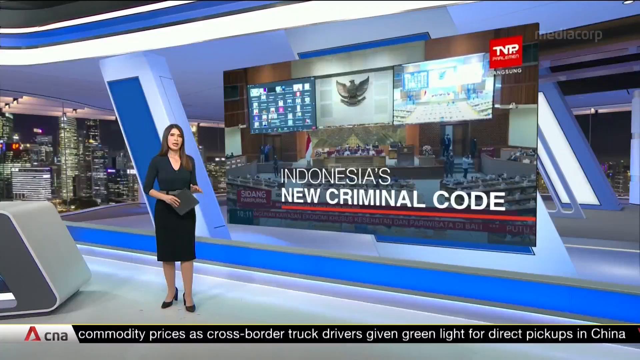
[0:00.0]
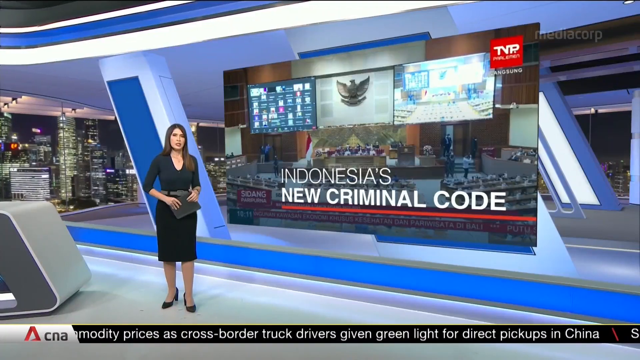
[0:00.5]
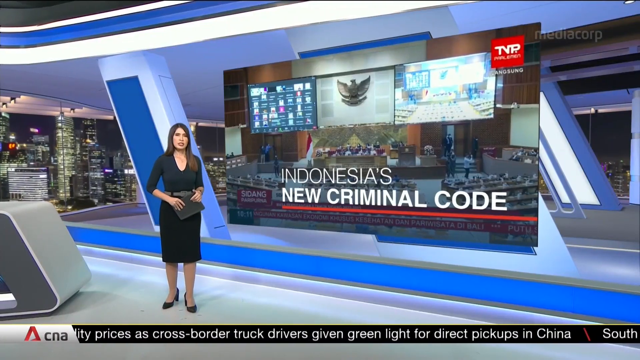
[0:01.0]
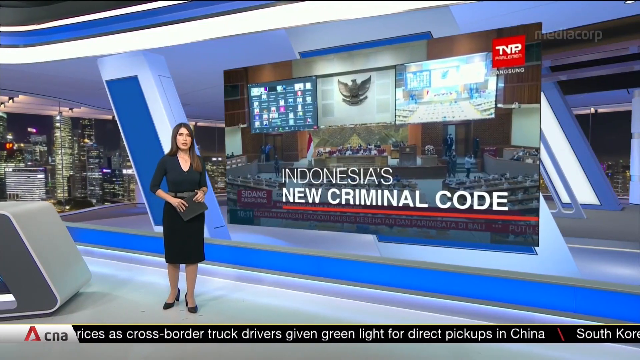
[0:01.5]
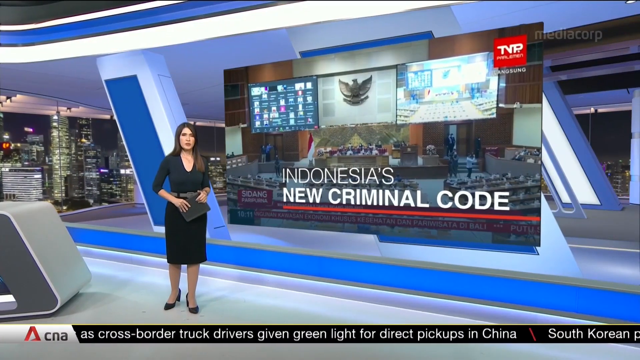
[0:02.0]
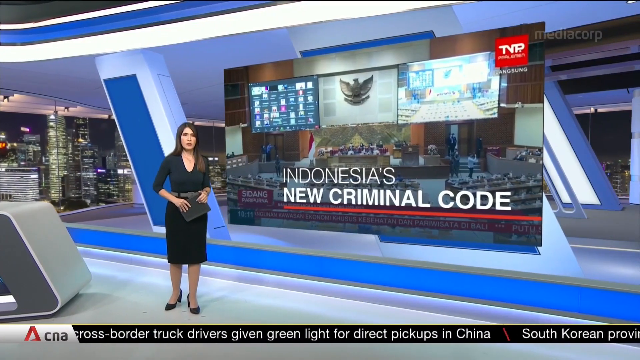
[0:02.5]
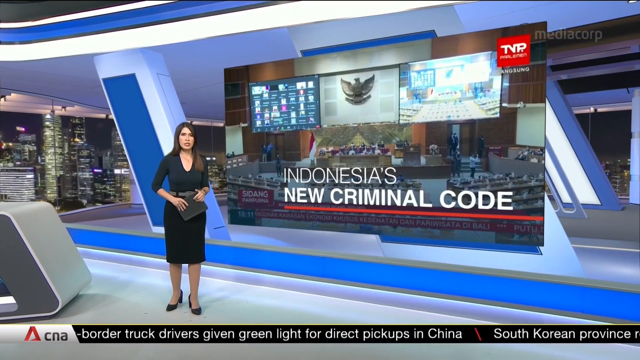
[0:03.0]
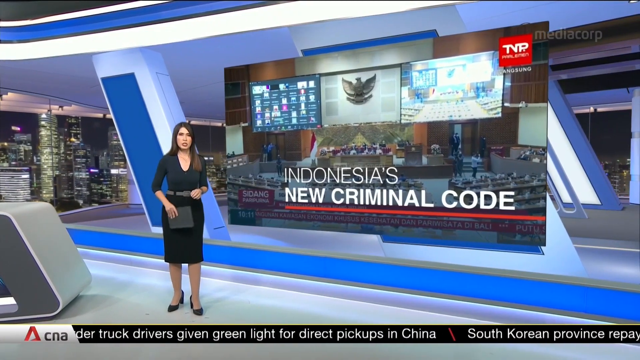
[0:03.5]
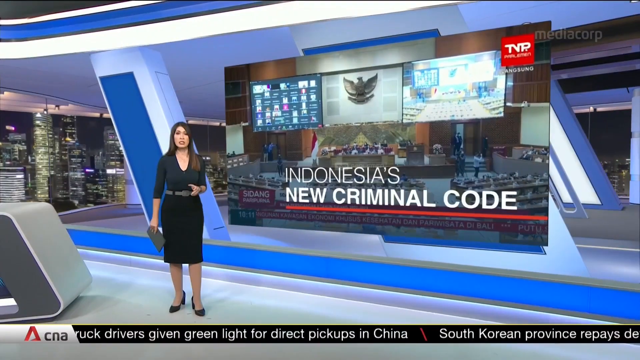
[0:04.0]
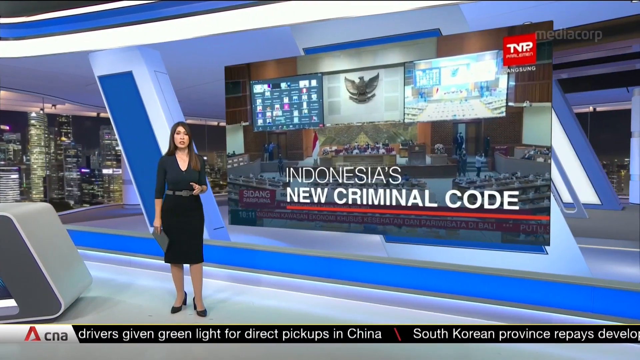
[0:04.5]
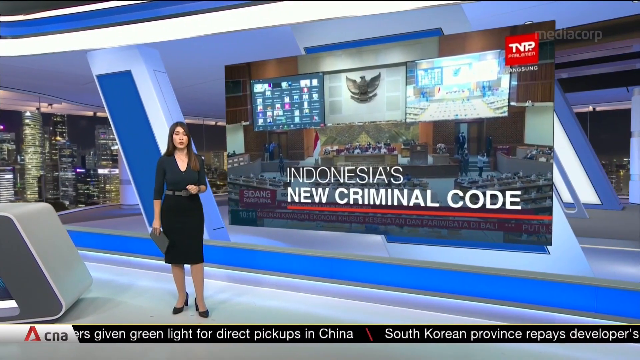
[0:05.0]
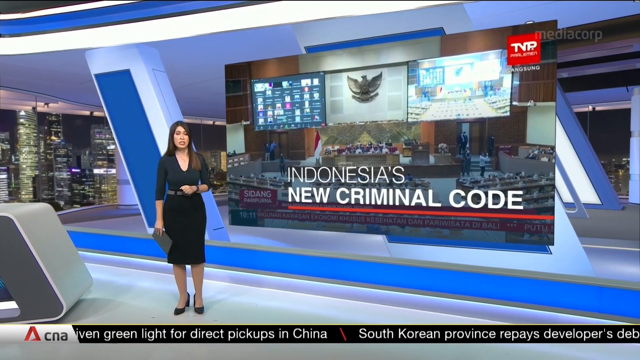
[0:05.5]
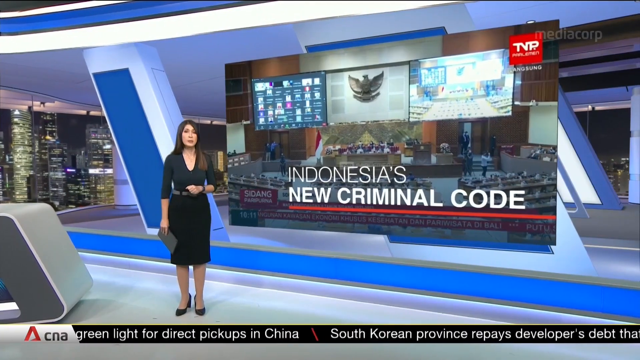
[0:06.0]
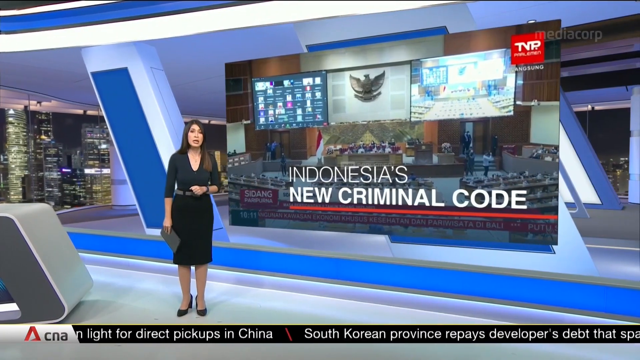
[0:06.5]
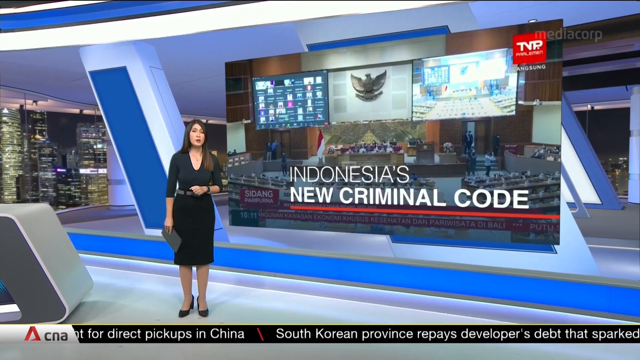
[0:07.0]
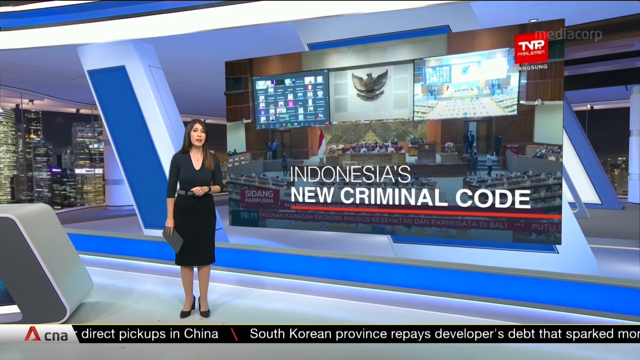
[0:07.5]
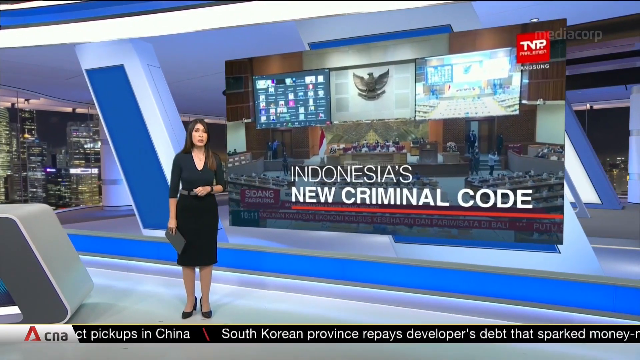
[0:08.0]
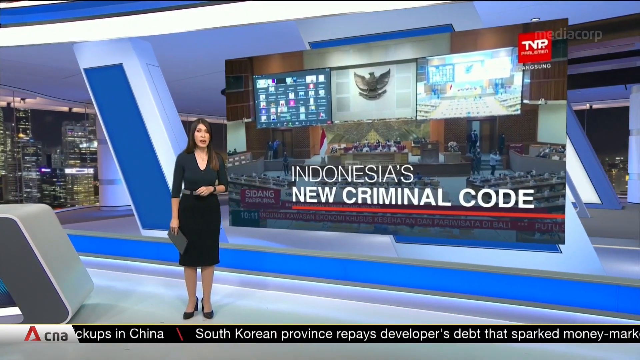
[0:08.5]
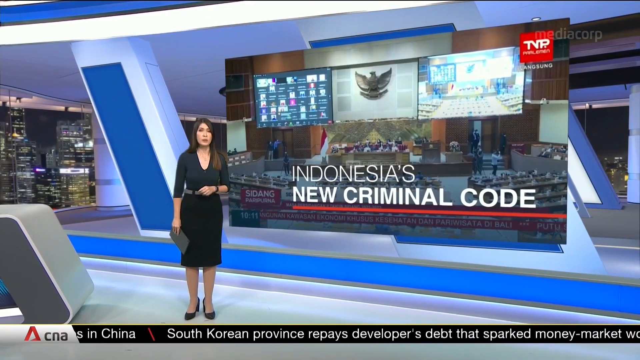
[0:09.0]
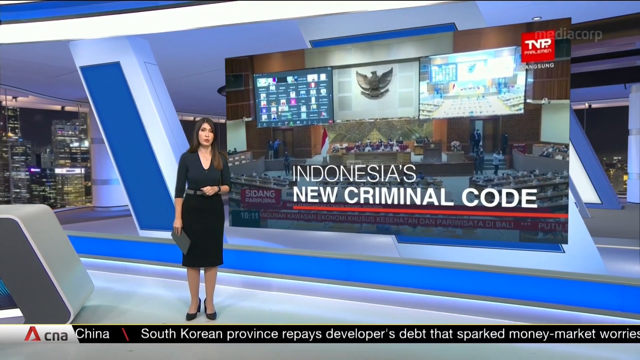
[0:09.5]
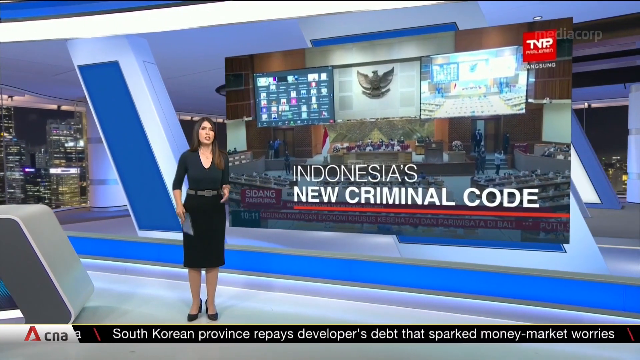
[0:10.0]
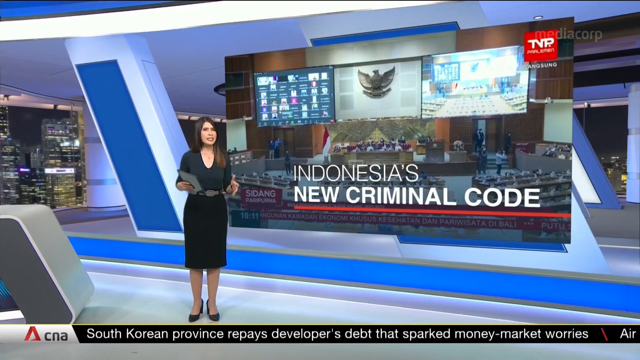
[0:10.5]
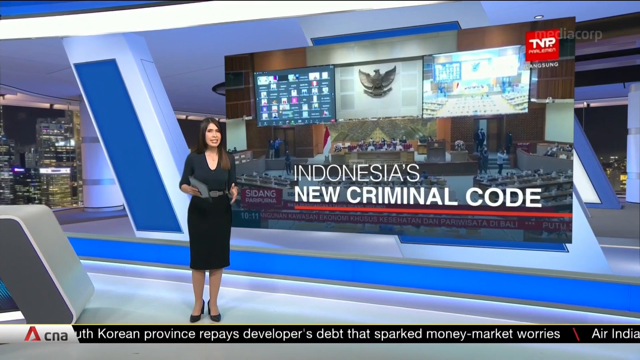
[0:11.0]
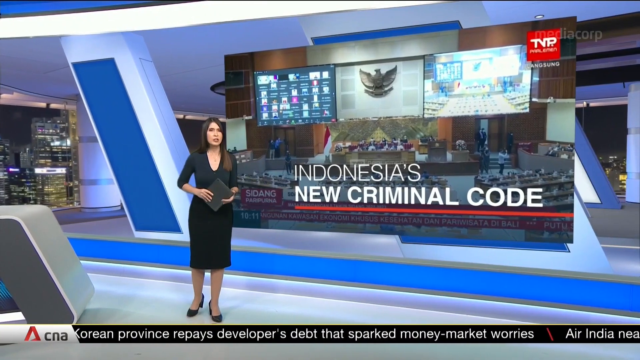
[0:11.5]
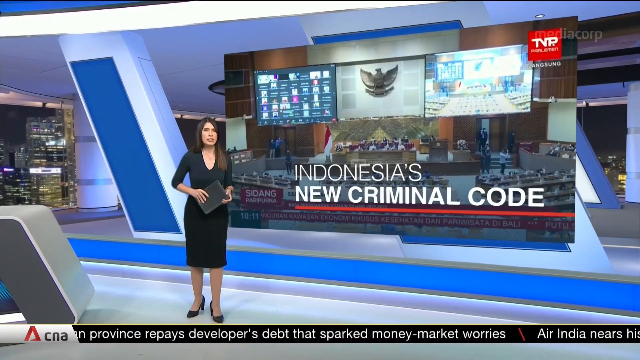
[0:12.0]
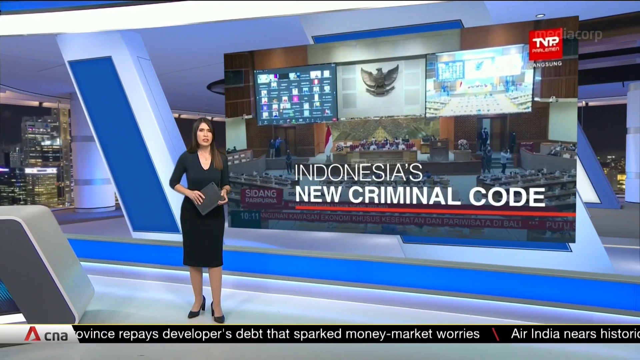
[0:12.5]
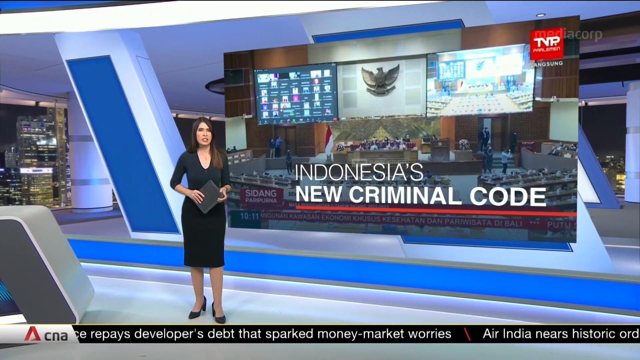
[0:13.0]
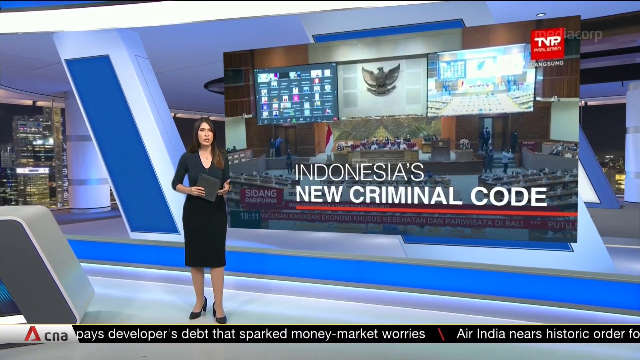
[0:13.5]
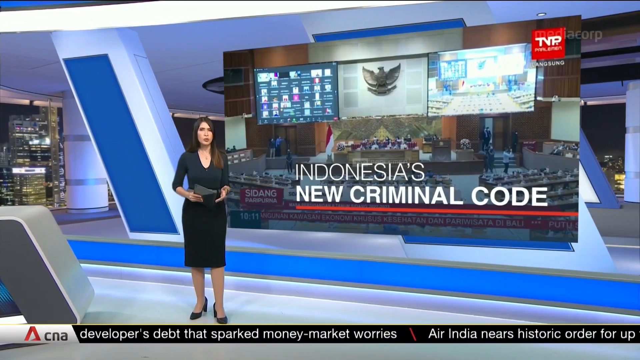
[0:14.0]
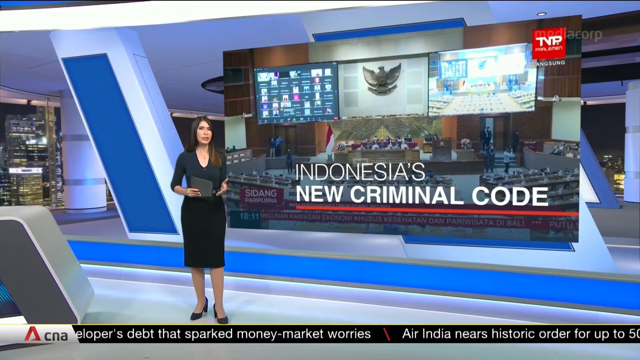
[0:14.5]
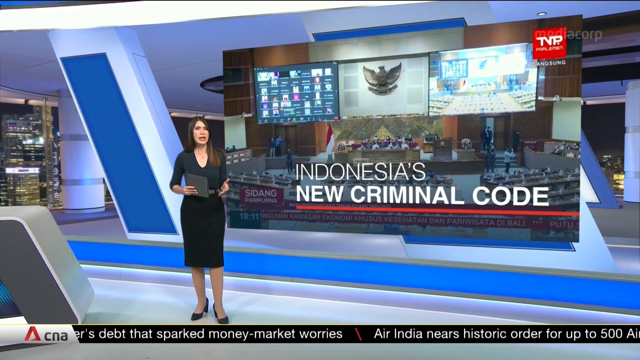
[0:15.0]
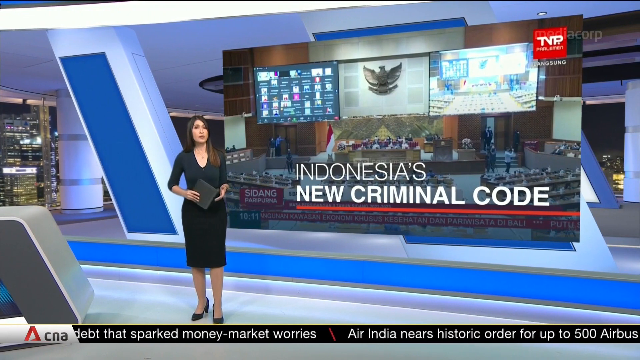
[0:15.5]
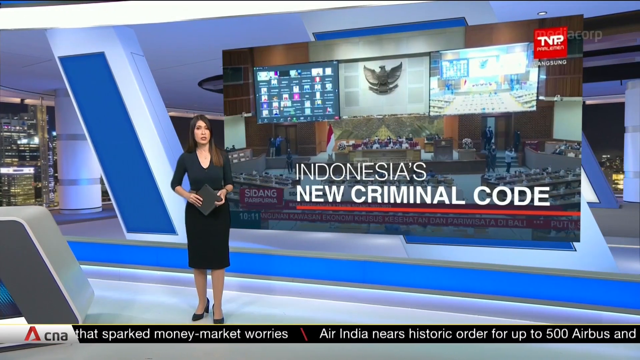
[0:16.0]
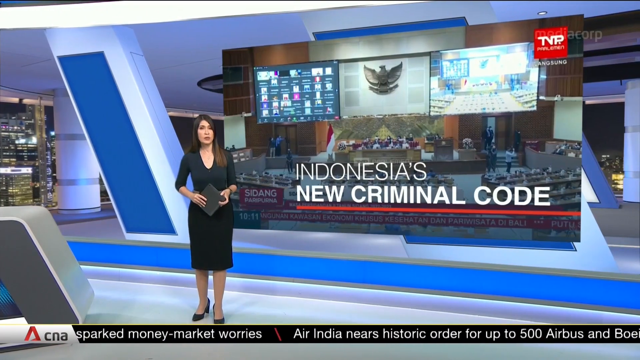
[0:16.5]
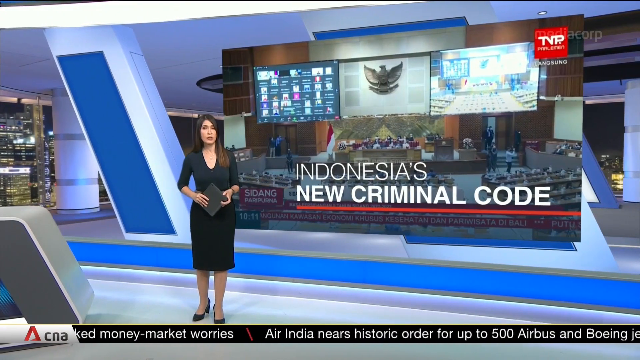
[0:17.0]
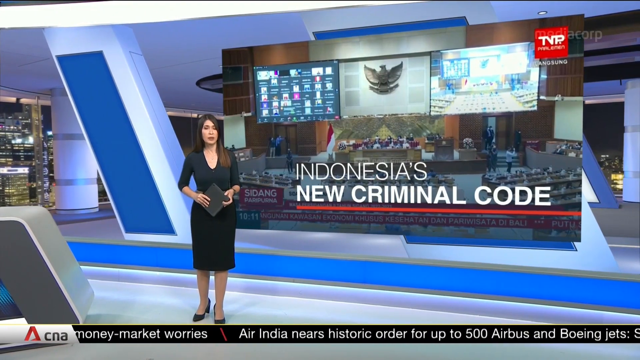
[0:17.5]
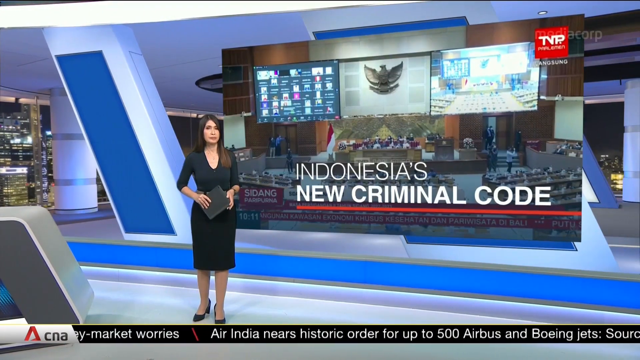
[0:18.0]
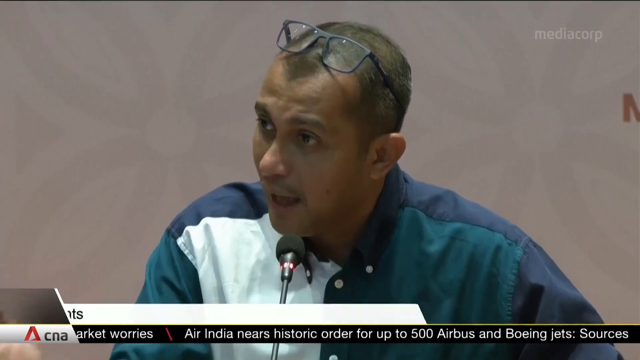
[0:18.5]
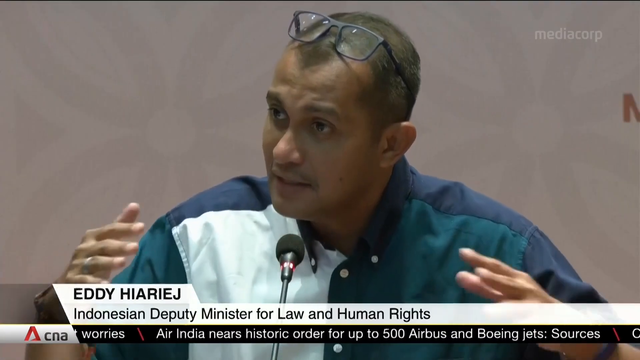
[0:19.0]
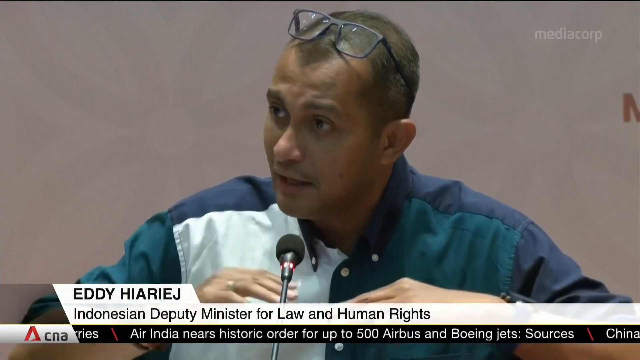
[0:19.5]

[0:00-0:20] A news anchor stands in front of a big screen with about three TVs in a very blue newsroom. She wears a long green V-neck dress with sleeves that go down to her elbows, and ballet flats or shoes with a little bit of a heel. White text reads "Indonesia's new criminal code", and there is a red box with white text at the top right. An eagle is in the middle of the screen, one screen shows lots of apps and another shows lots of lights. Behind her is a very large city with many lights visible. The video then shows a man talking, with glasses on his head; the glasses have black edges and clear lenses. His shirt is kind of green, white and dark blue. Black text reads "Eddie Haruji", a black microphone is in front of him, and words are written along the bottom of the screen.